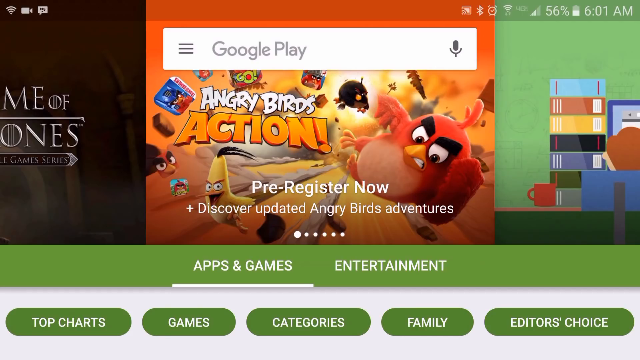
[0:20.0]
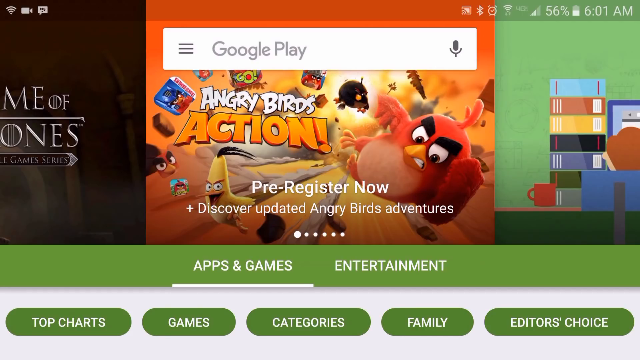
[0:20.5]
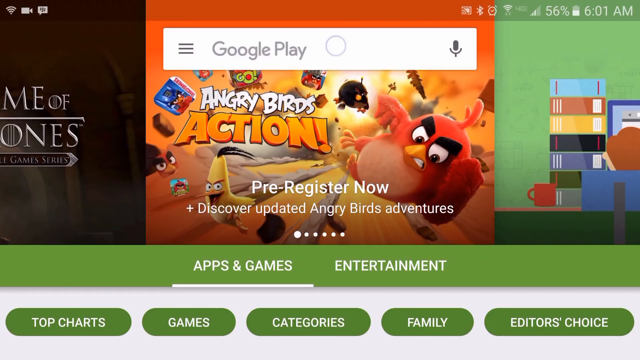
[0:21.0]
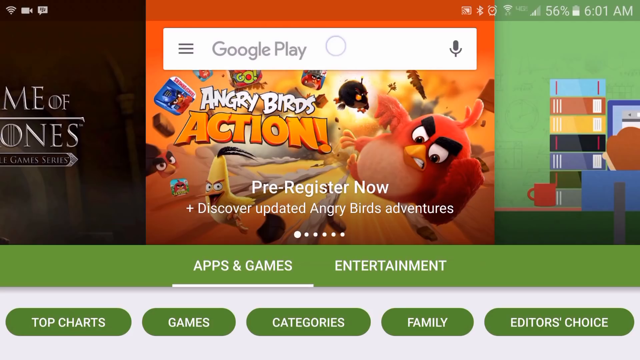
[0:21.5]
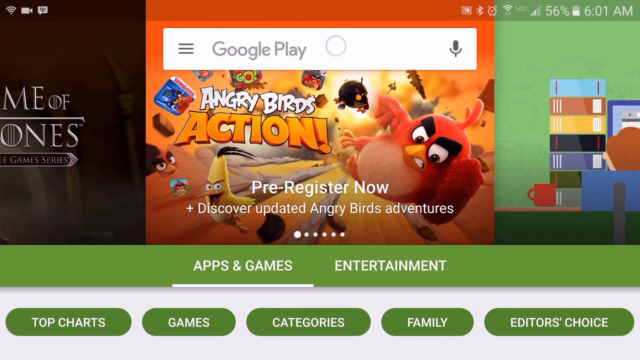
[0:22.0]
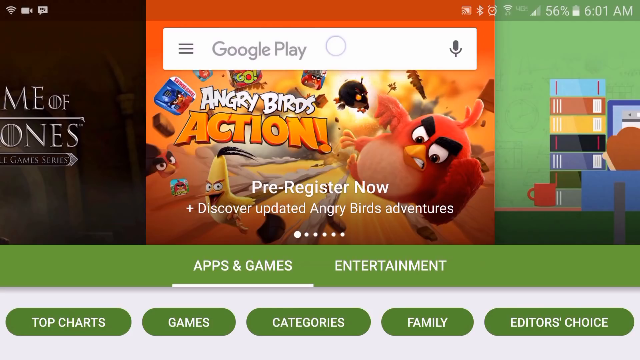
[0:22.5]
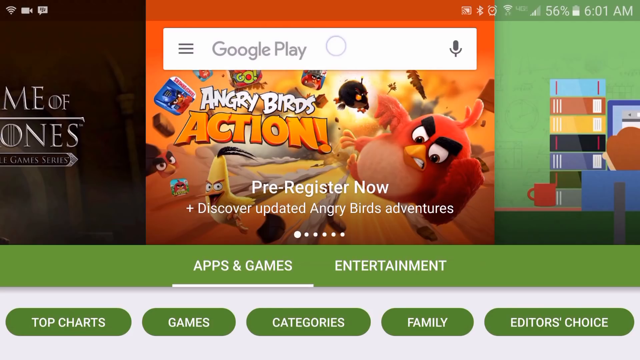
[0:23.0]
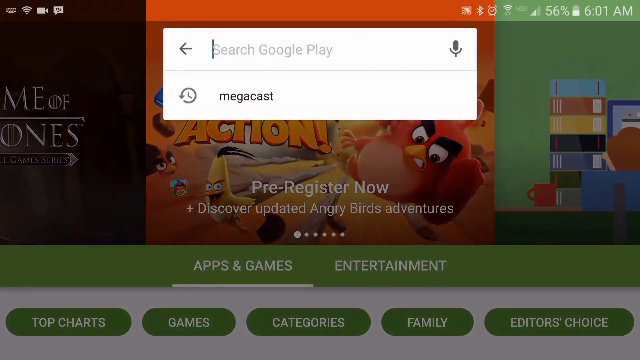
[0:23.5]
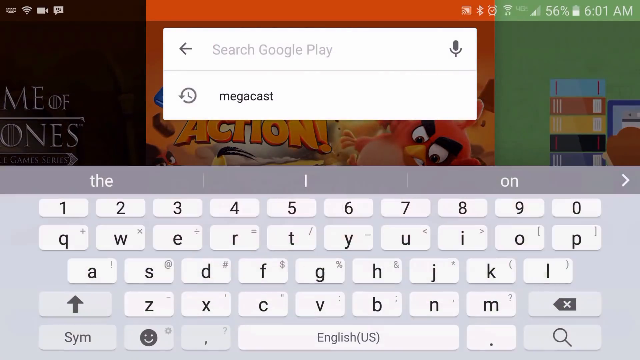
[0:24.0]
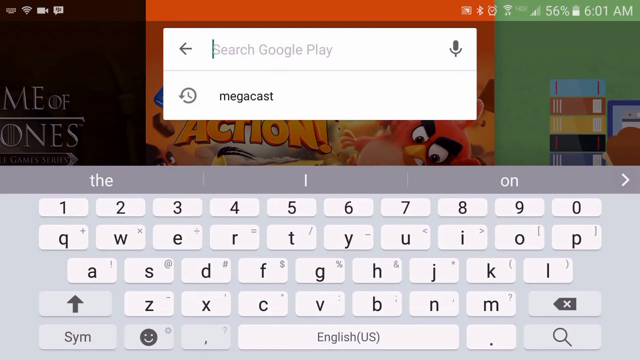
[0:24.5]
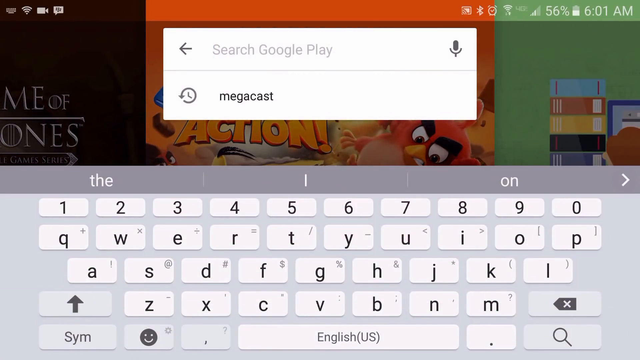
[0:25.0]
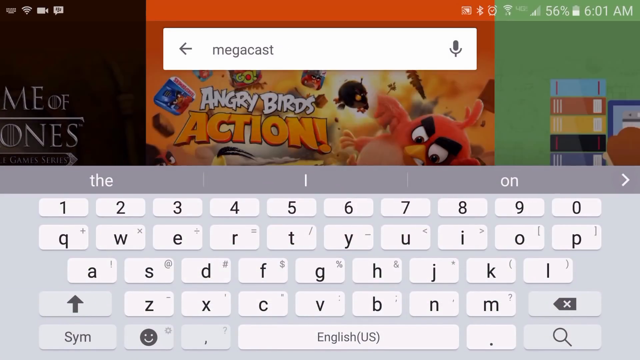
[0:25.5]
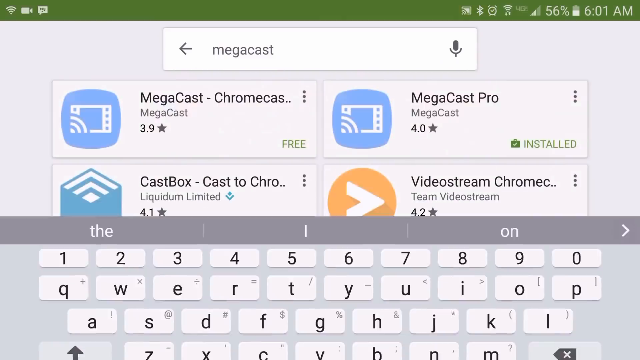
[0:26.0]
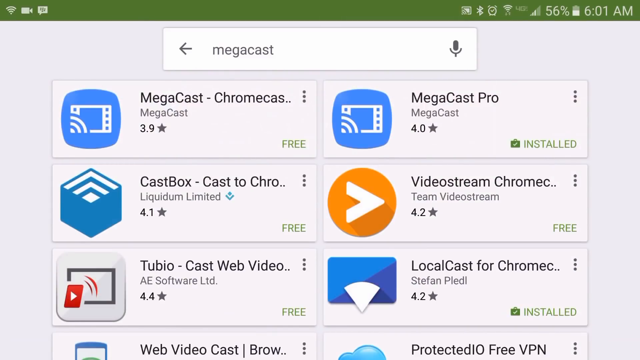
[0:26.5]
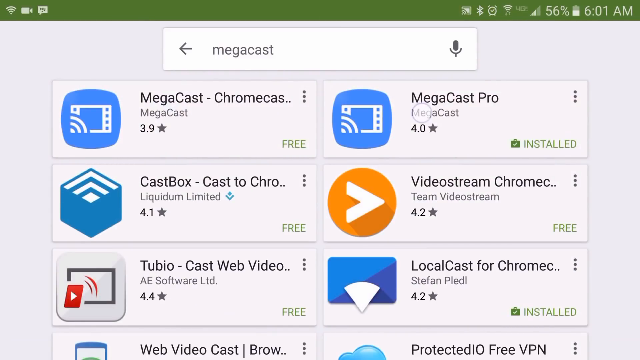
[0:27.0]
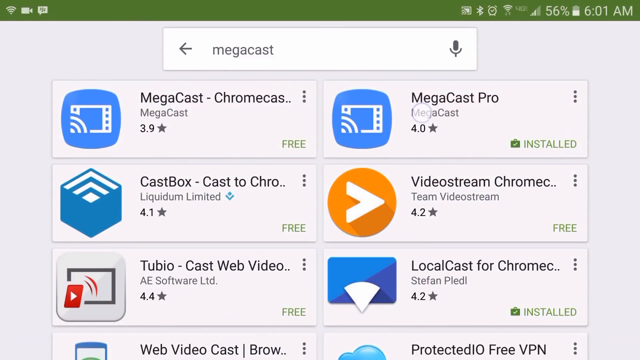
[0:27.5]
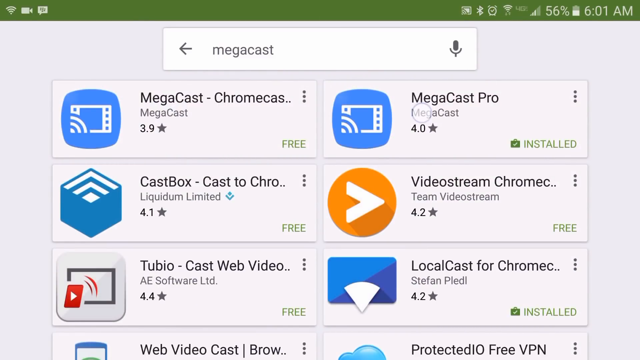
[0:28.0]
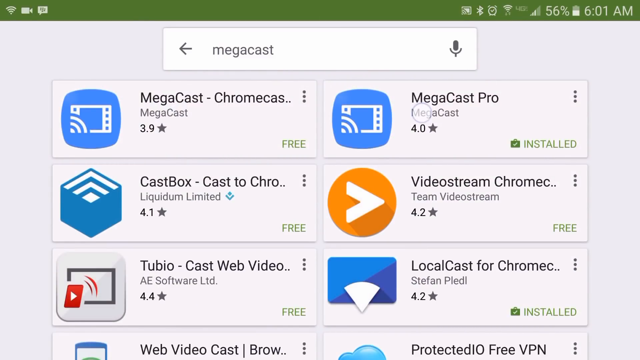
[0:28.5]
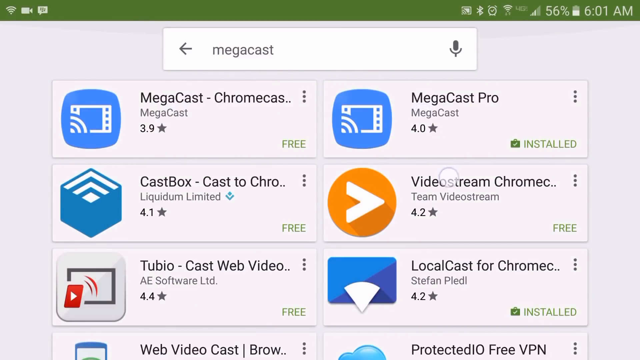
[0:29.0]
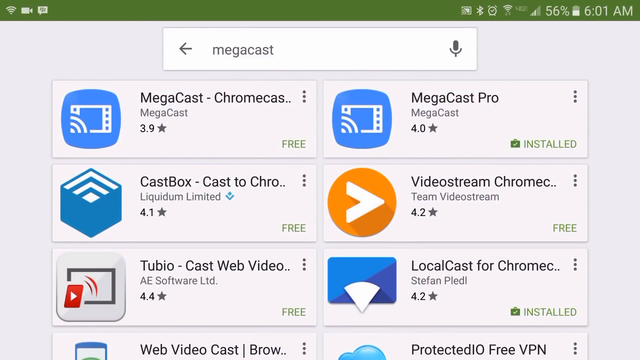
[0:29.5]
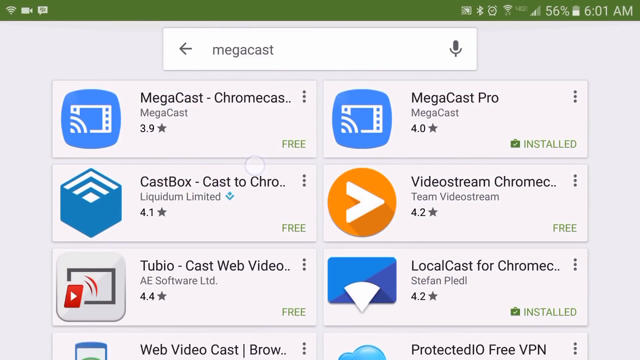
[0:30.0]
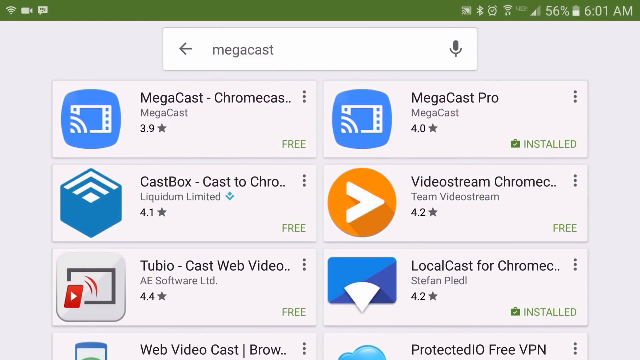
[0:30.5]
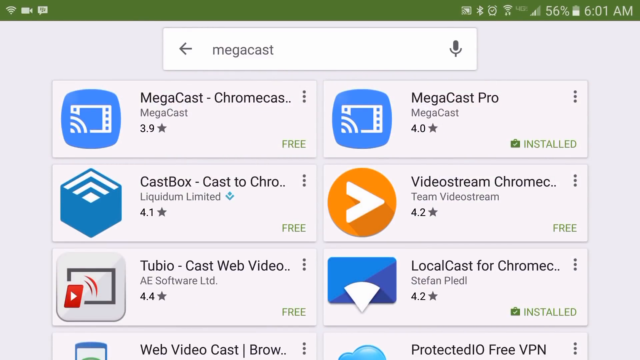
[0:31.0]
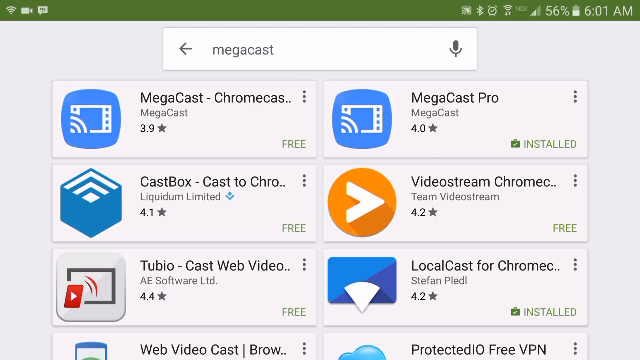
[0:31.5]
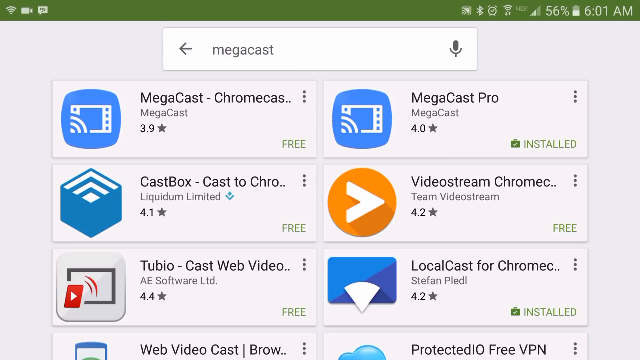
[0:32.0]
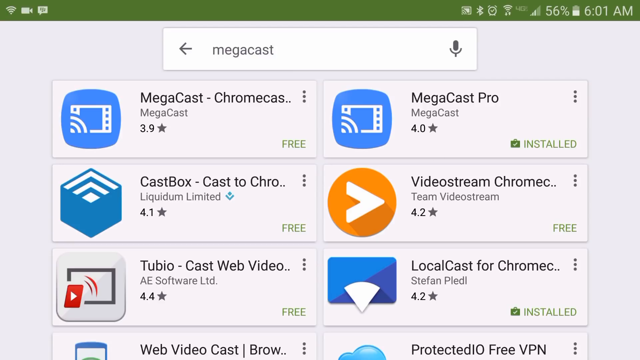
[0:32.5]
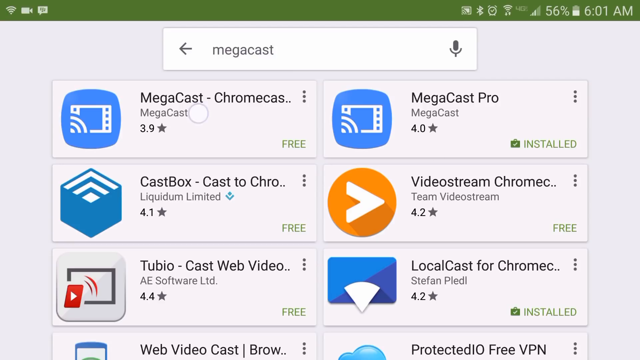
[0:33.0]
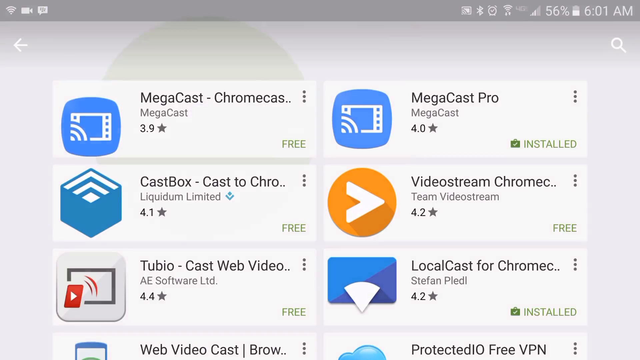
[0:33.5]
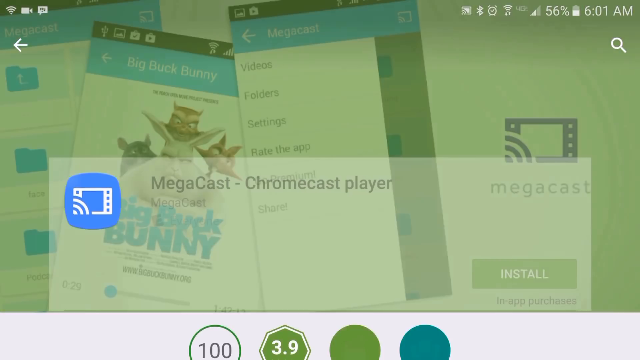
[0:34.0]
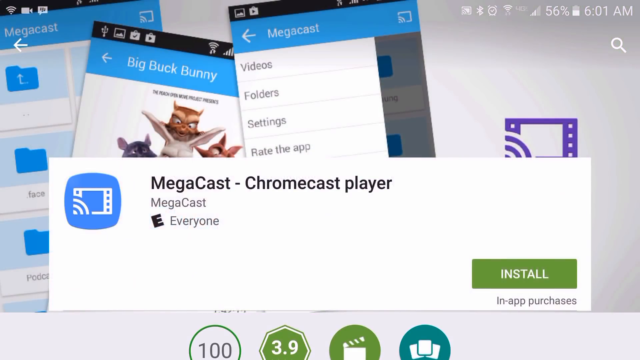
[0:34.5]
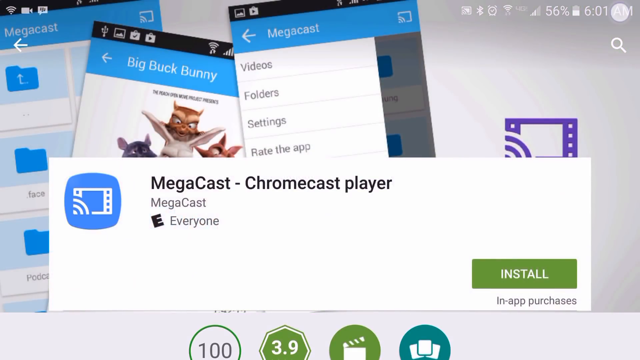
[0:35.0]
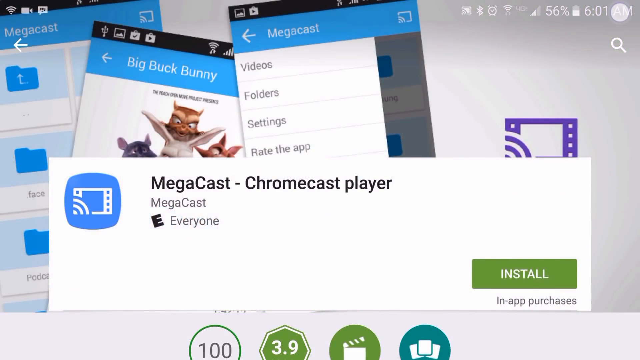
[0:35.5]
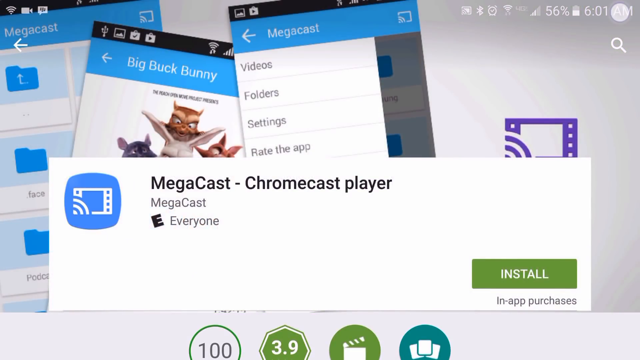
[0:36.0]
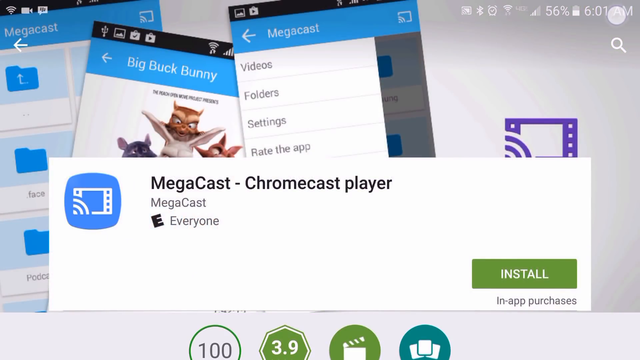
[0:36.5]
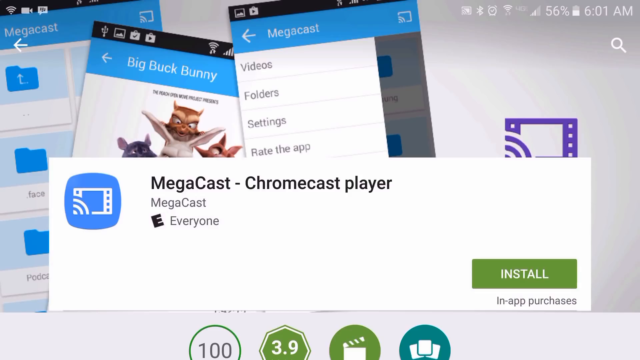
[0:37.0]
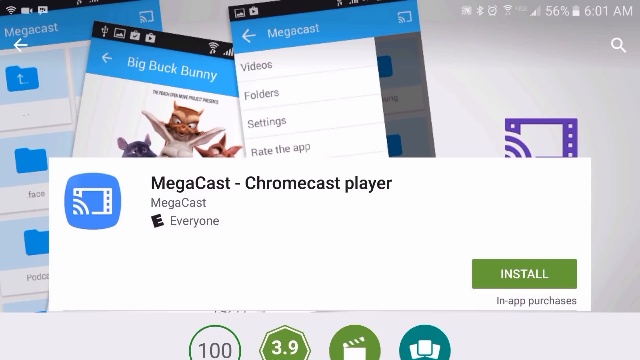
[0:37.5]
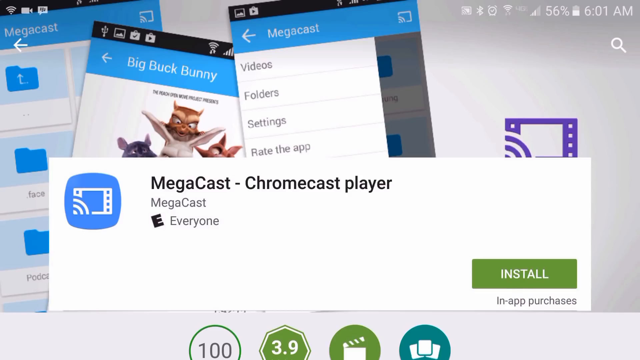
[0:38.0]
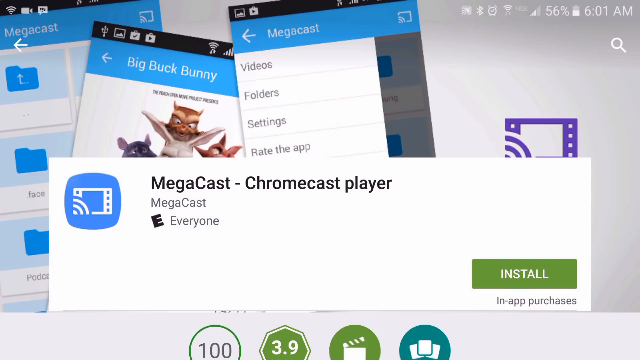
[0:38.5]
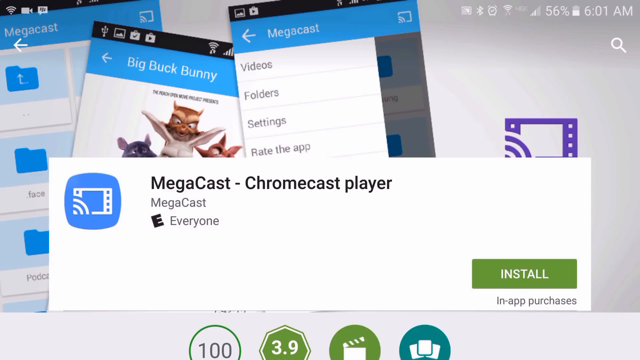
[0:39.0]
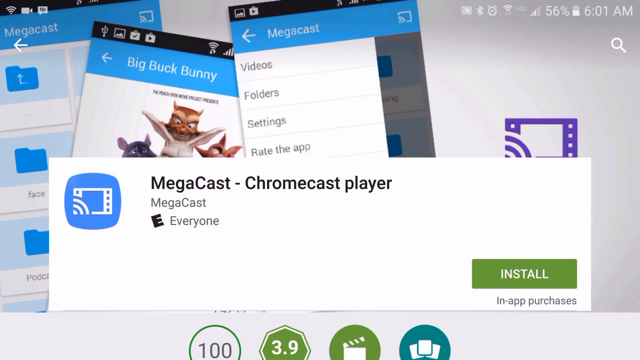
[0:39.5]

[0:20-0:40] A Google Play image is shown, with the Google Play search bar at the top. On the left is part of a Game of Thrones cover. In the center it says "Angry Birds Action, pre-register now" and shows the Angry Birds game. To the right is an advertisement for what looks to be some kind of study, showing a stack of books and a person sitting at a computer. The apps and games section is shown at the bottom. A search is then made for Megacast, and the app Megacast, a Chromecast player, is found.